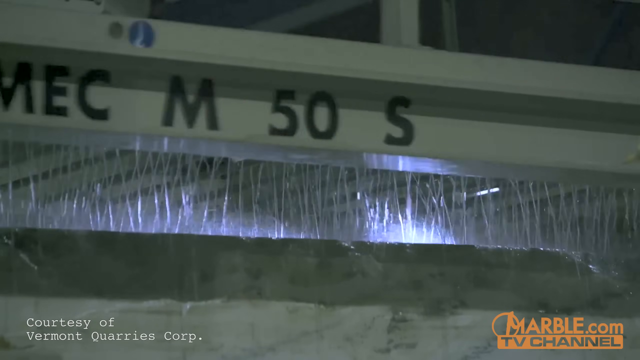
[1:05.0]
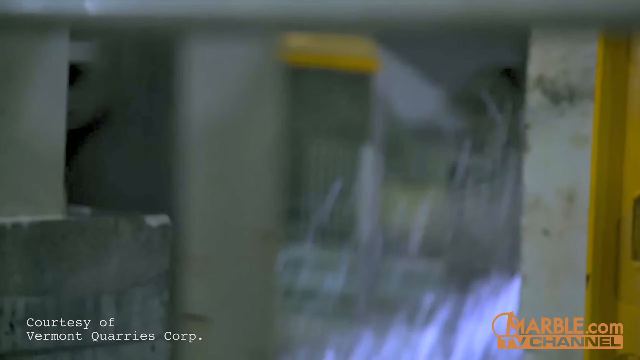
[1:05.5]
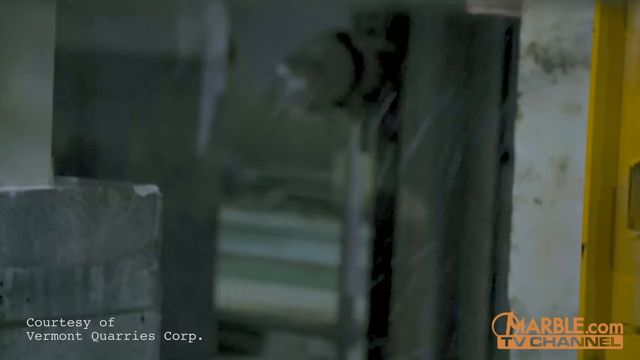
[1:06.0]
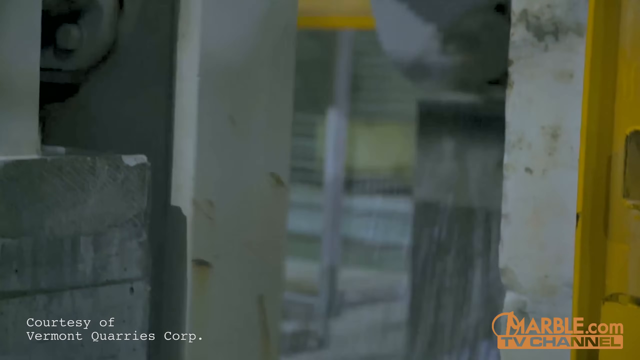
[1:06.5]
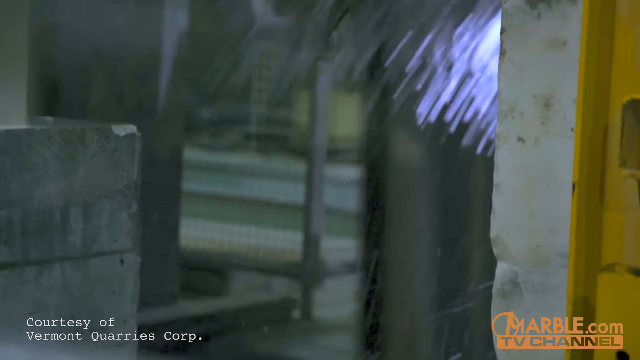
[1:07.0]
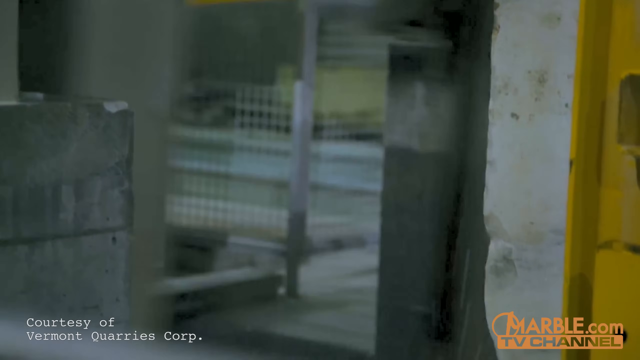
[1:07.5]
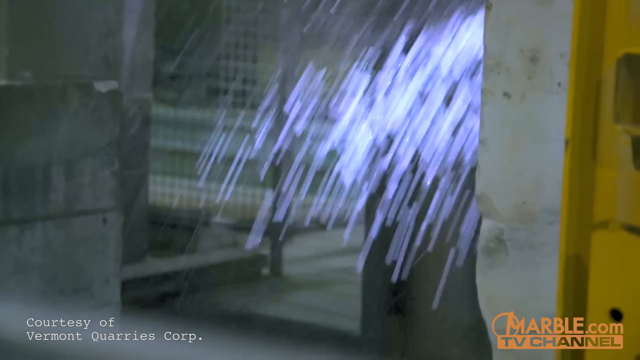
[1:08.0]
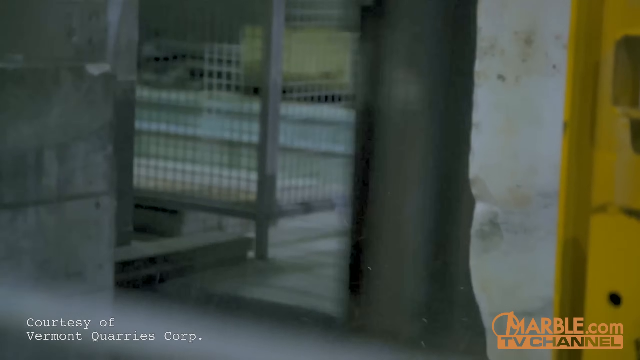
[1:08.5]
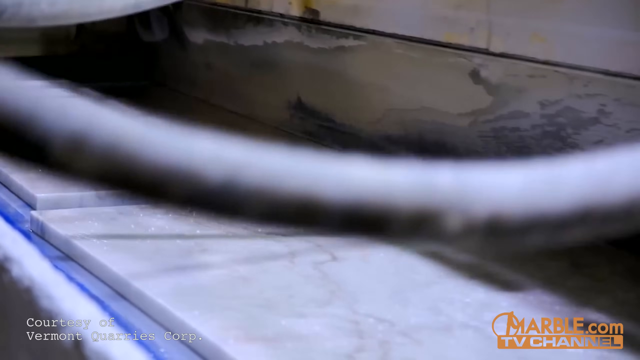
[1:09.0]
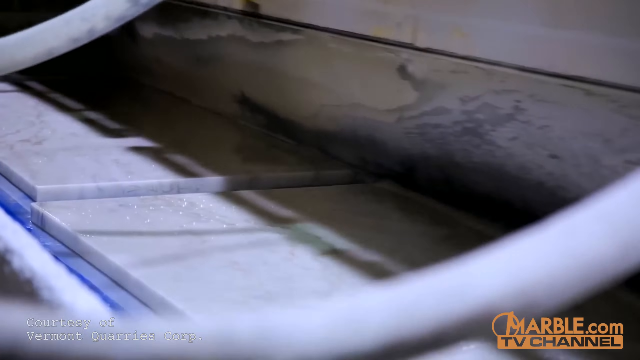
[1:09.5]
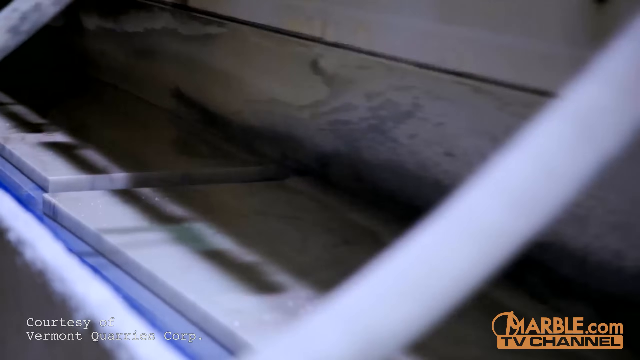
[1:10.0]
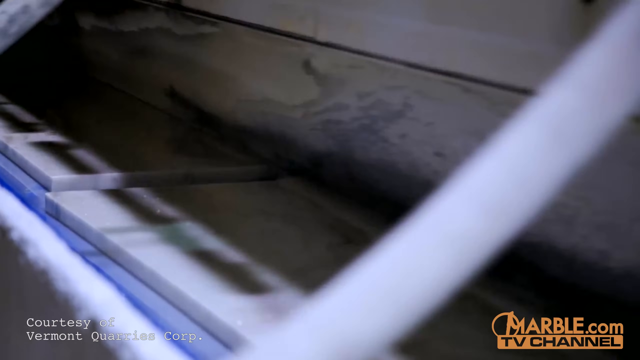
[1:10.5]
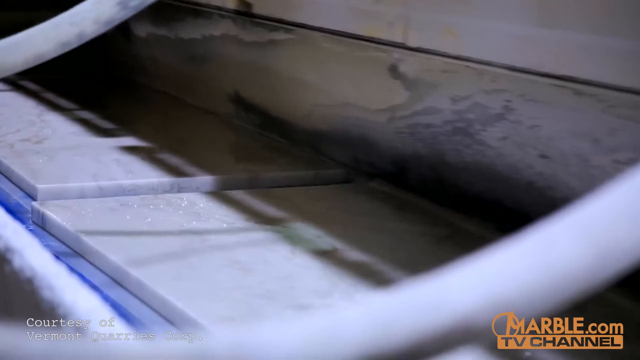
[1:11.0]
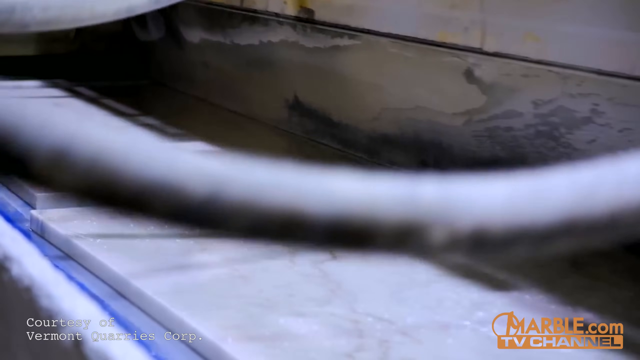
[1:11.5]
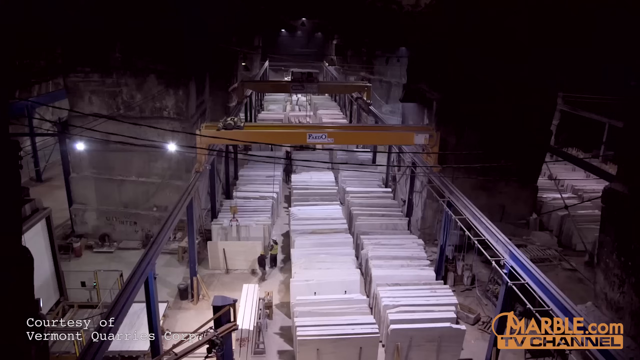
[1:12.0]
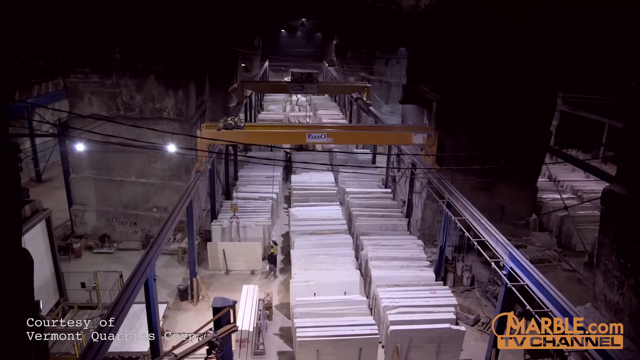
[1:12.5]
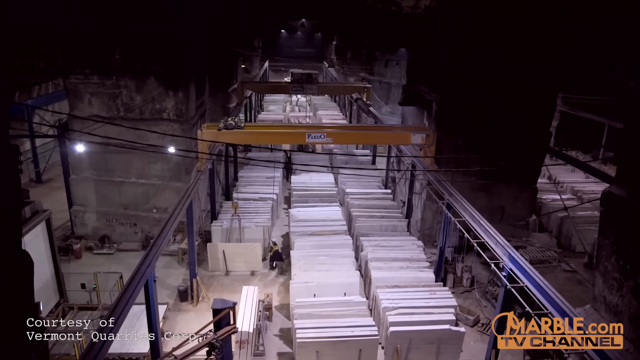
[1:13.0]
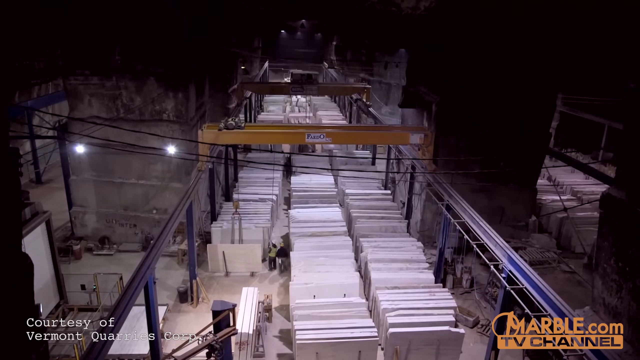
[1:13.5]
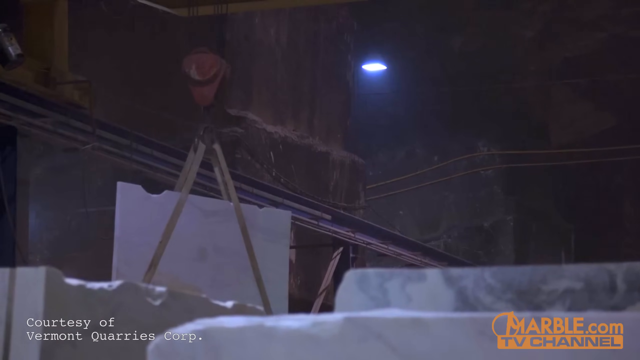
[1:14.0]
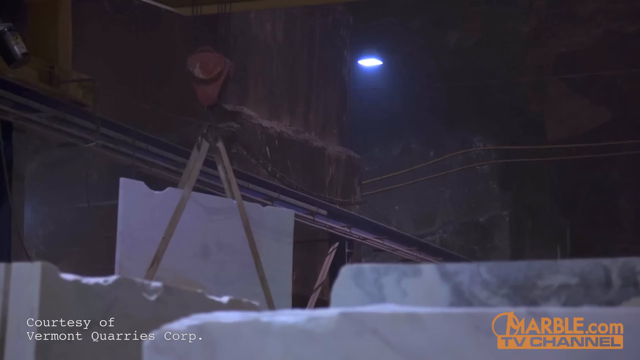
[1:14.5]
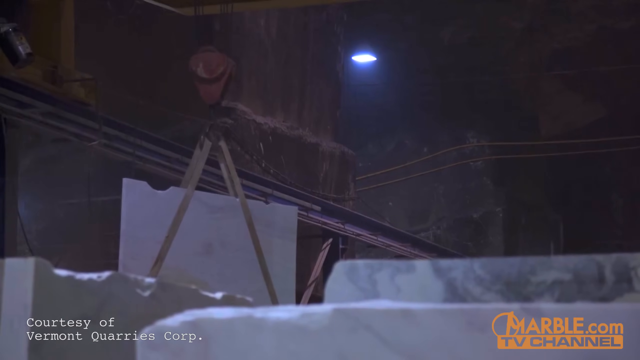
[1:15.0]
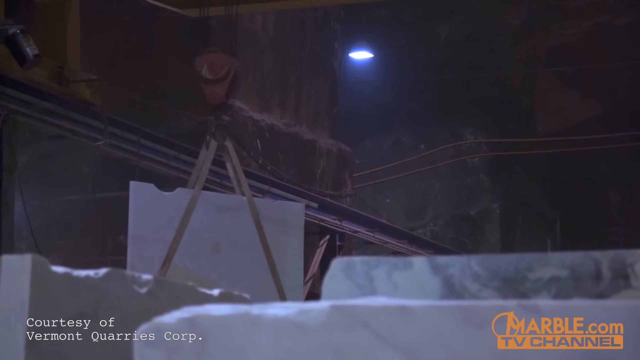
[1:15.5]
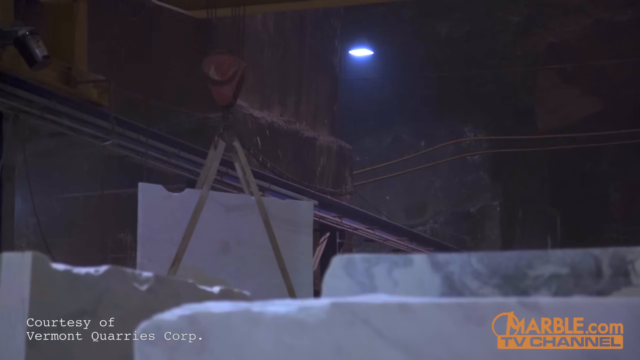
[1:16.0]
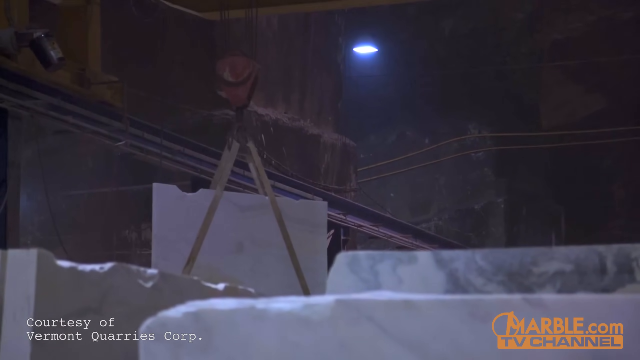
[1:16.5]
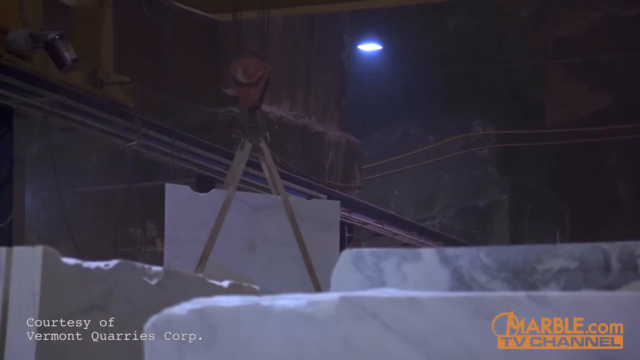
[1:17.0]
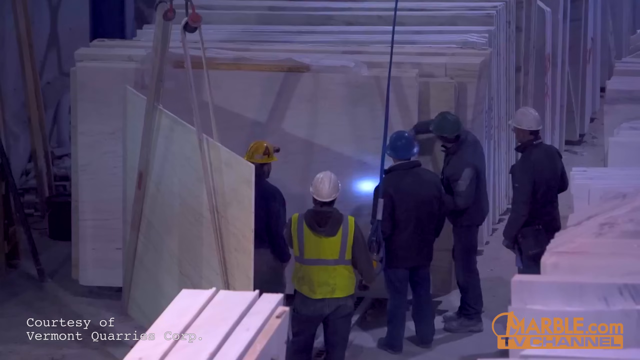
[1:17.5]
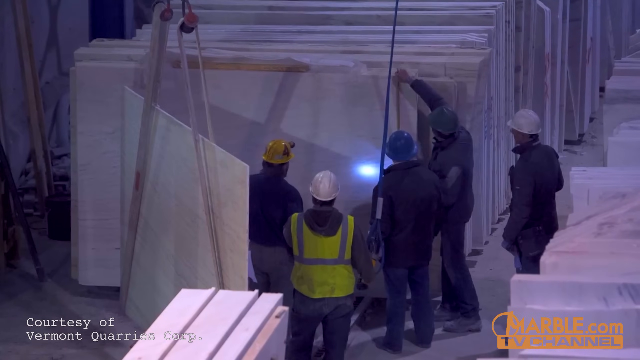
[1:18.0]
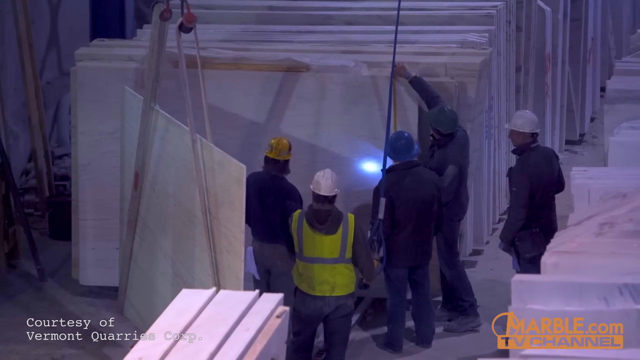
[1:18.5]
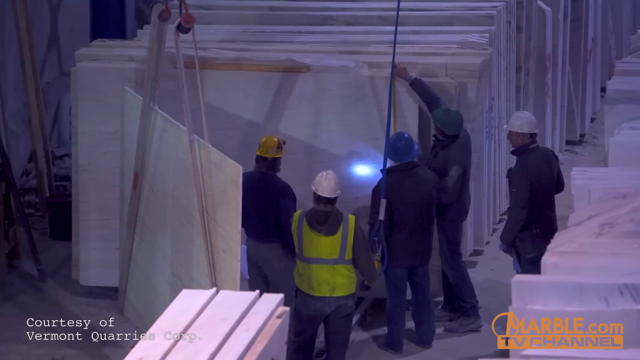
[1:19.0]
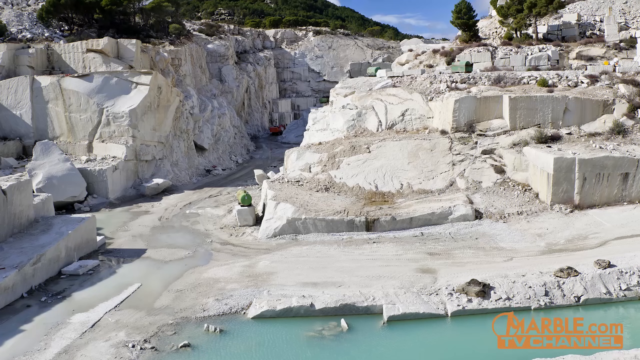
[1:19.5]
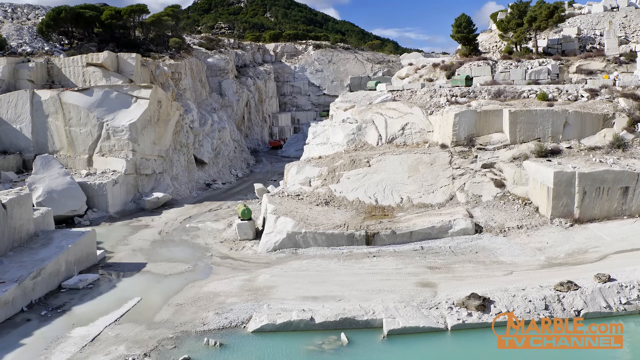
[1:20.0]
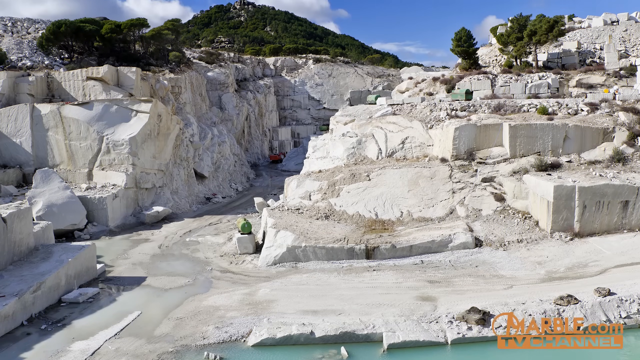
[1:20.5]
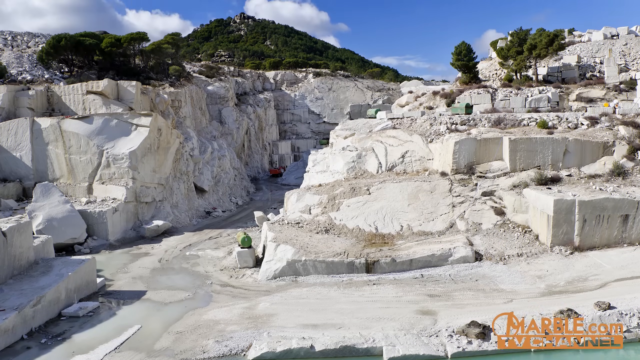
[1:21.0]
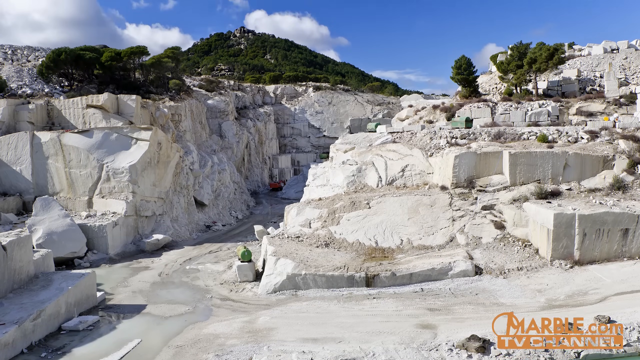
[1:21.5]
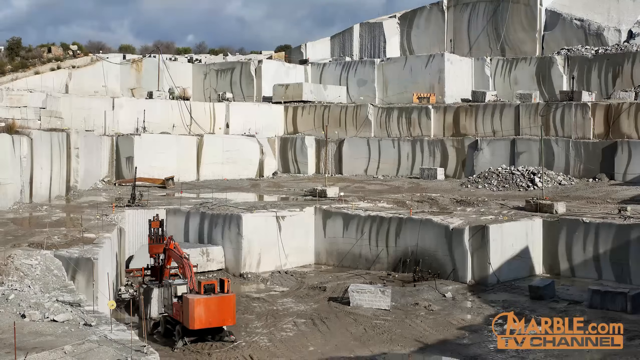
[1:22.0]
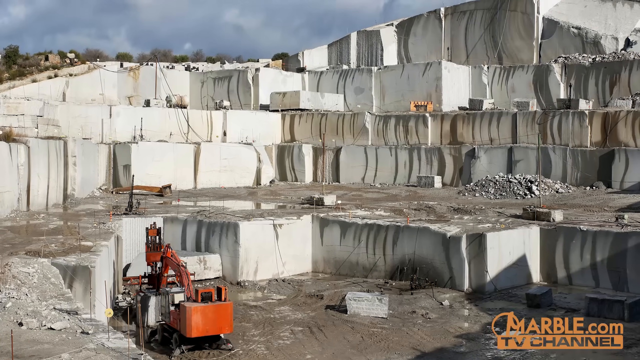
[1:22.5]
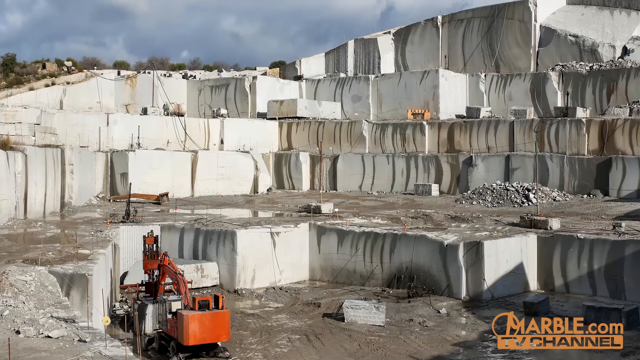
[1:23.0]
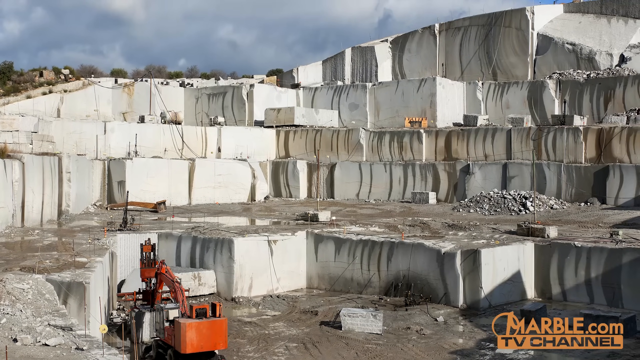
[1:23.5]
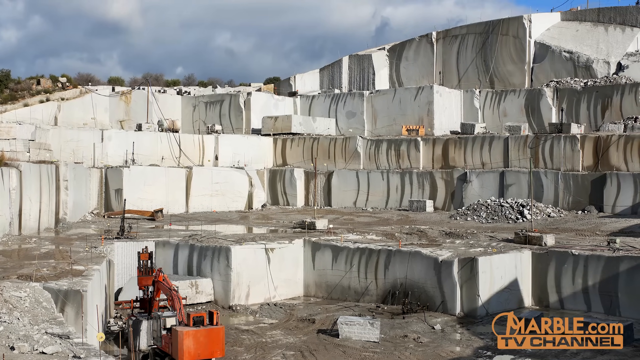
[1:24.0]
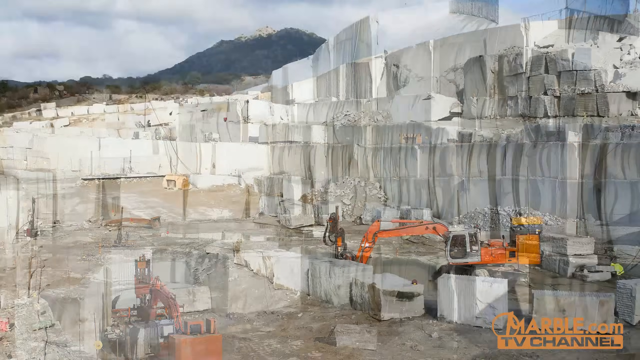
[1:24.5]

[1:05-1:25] Another close-up shows machinery moving back and forth, with a spray of what looks like water illuminated by some kind of light, or possibly sparks rather than water. Another close-up shows what looks like a machine cutting the stone into thin slabs, kind of like tiles. A wider view shows many, many of these tiles all standing up straight as a yellow bar moves along the top of them. In a close-up, a piece of the stone looks to be held in a kind of sling and is moved along a conveyor belt. A quick shot follows of several workers who seem to be measuring large slabs that are taller than them. The camera then pans over a photo of big chunks of the white marble stone in the surrounding area, followed by another still of big chunks of white rock, this time cut into very precise-looking rectangles. The last view goes back to the original work site shown in the video.